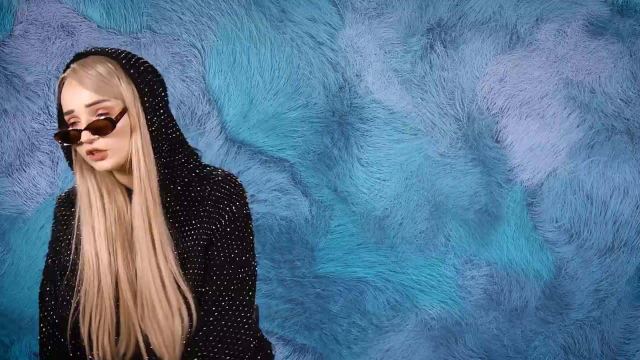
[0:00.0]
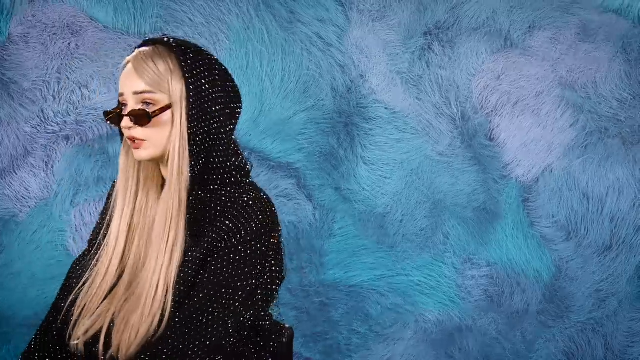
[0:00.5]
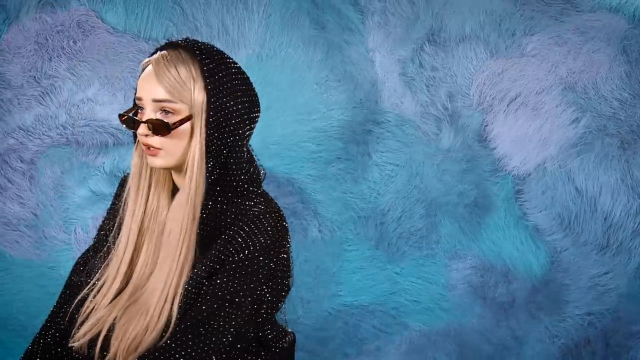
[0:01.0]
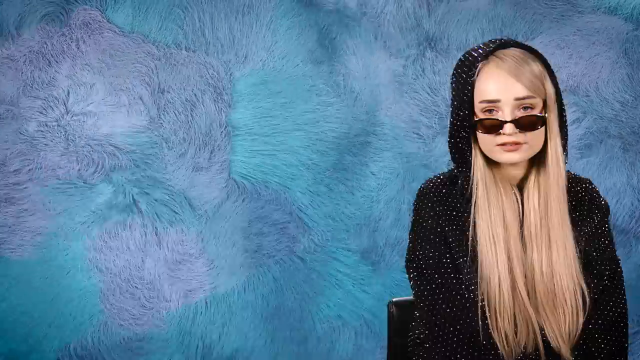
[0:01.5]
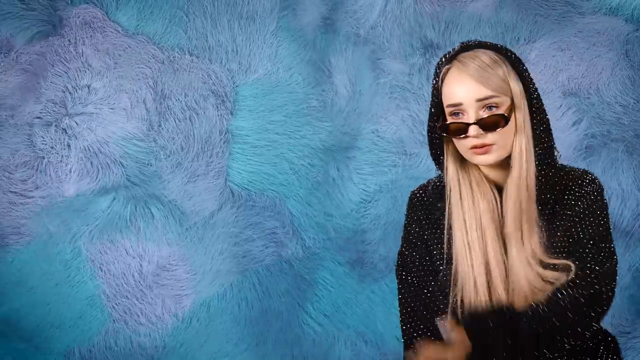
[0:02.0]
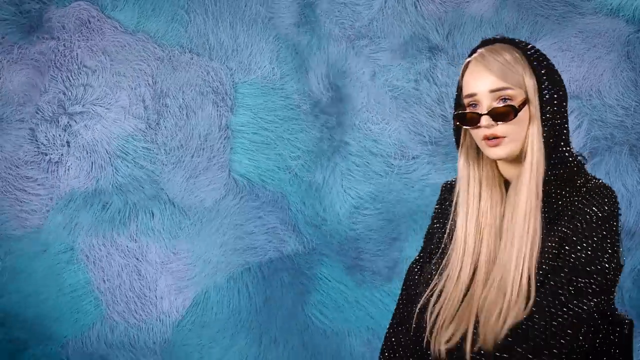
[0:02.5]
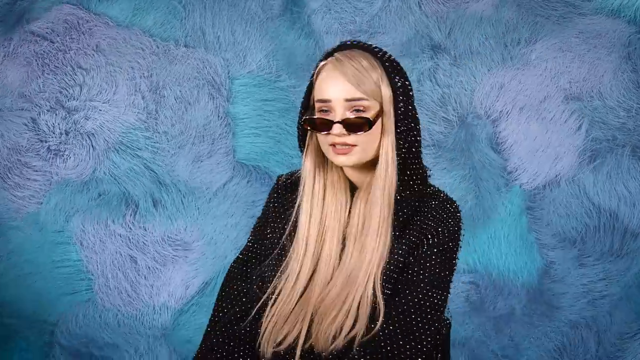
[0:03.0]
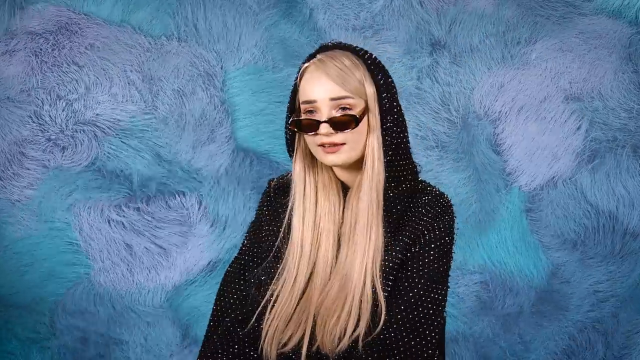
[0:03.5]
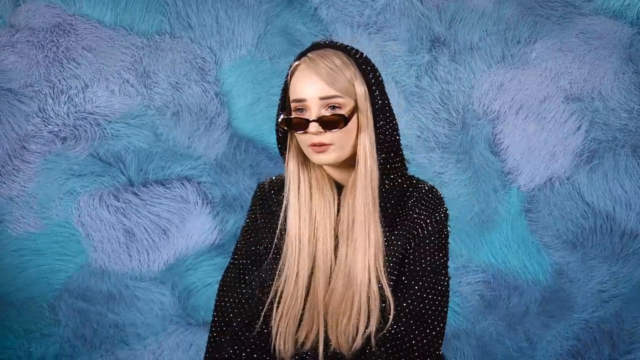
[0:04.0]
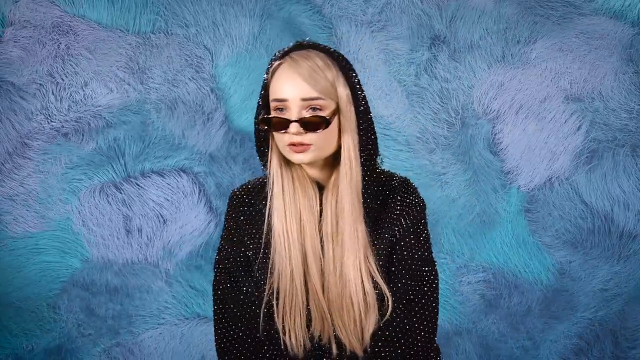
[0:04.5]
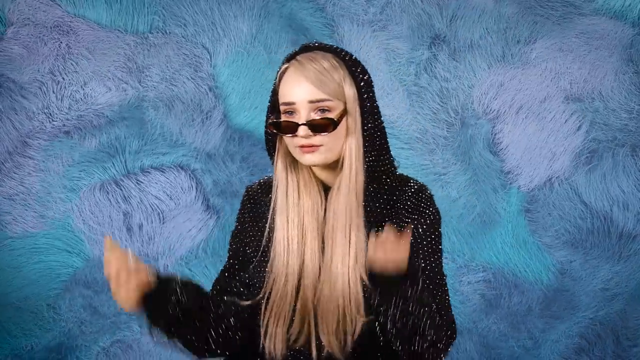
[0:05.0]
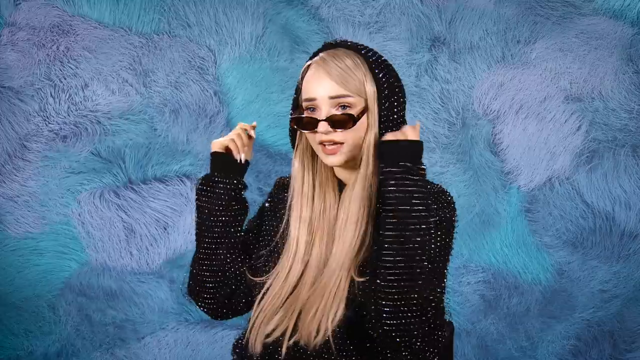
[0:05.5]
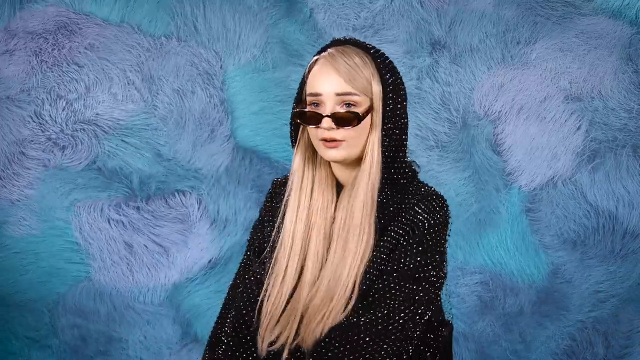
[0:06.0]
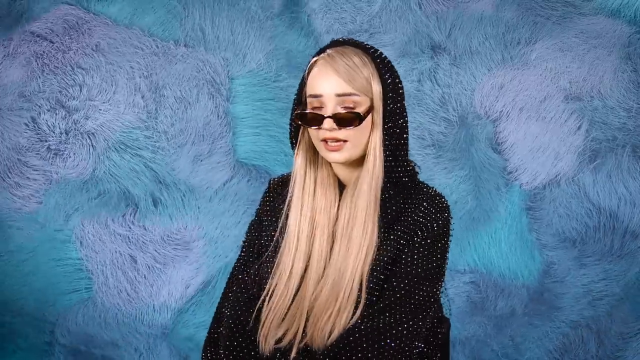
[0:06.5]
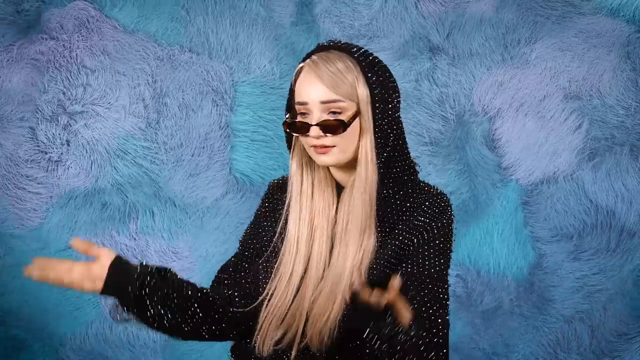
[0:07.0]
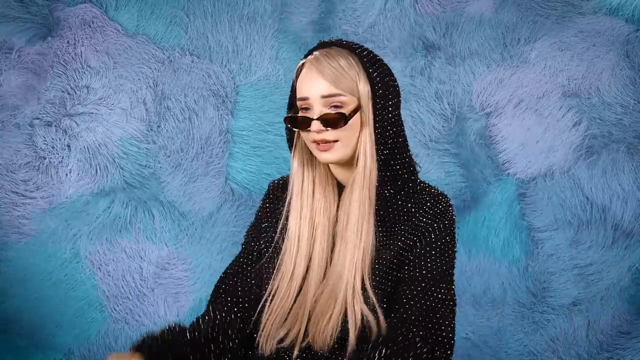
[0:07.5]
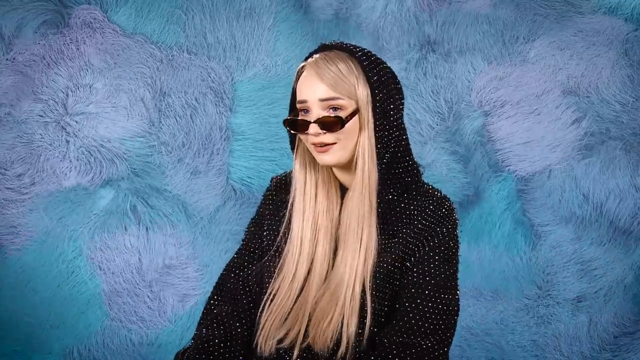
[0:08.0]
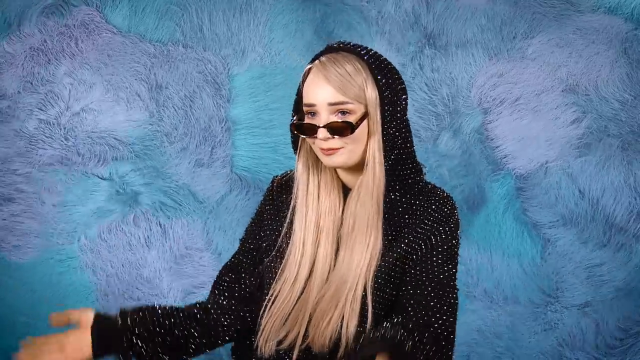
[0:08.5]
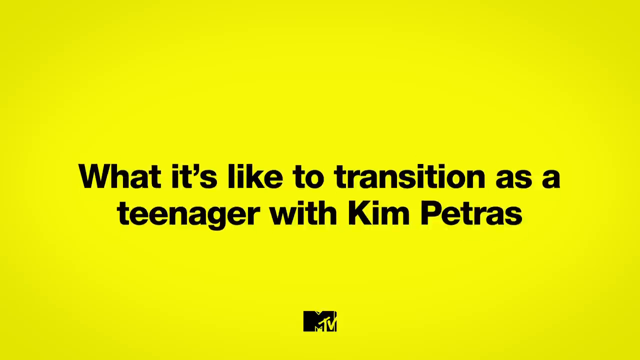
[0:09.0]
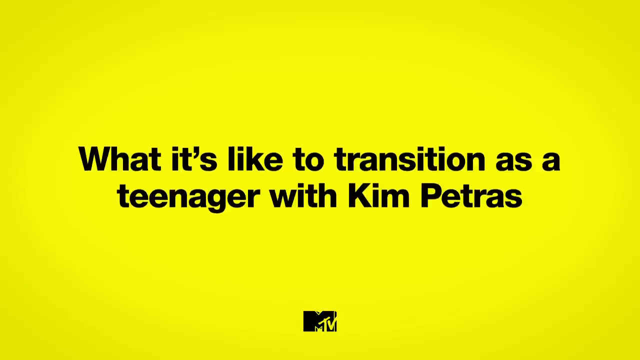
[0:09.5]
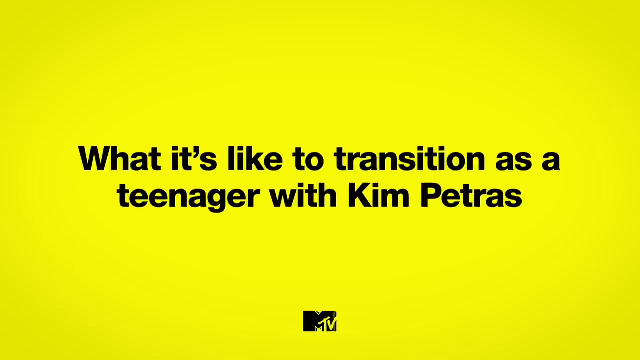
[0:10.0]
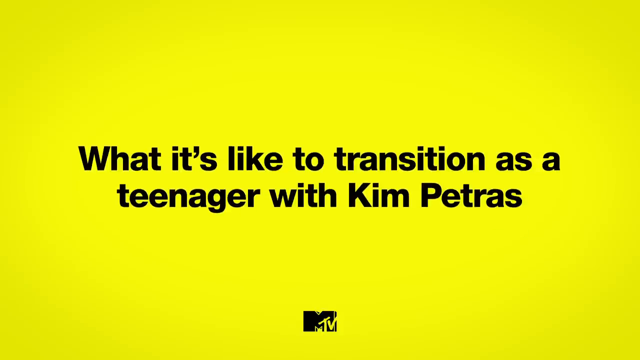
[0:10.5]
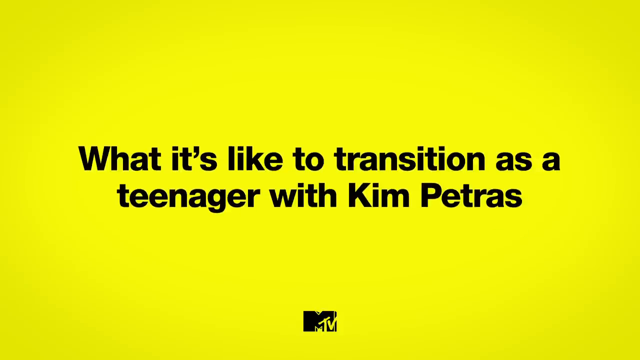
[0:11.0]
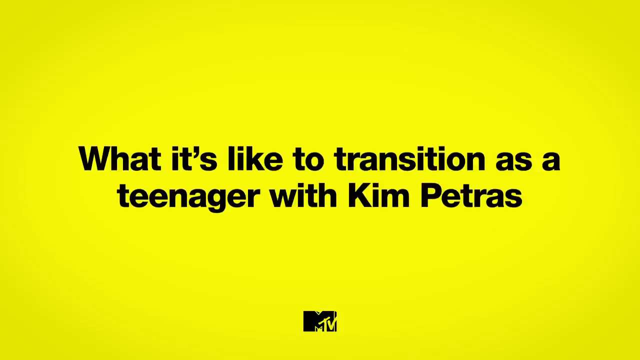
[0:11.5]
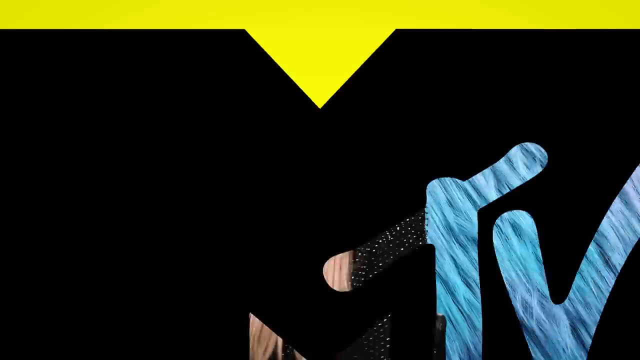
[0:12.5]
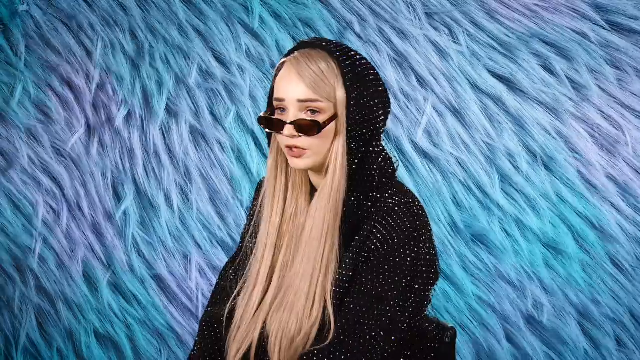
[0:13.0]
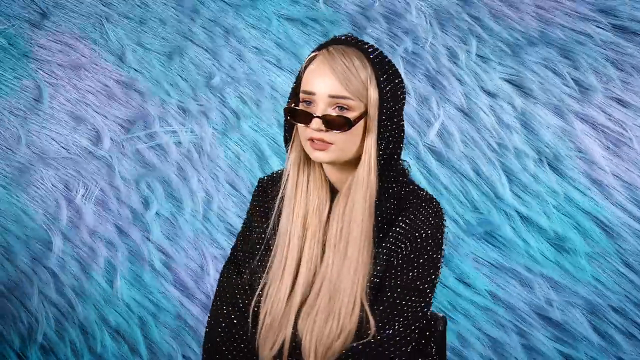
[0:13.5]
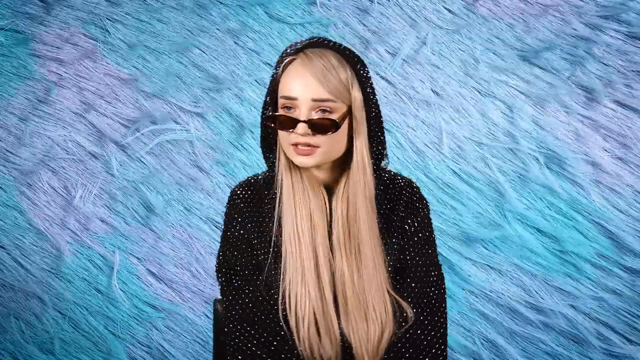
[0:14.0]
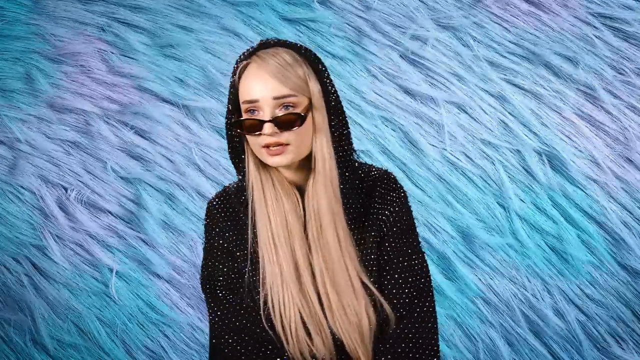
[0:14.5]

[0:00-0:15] The main subject is a white person named Kim Patras, who appears to be in their mid-20s, with blonde hair and glasses, wearing a black sequined jacket. They are being interviewed, talking and answering questions. Only this one person appears. Between the interview shots are clips apparently from this person's music videos, also featuring them singing and dancing. The interview background looks like something fluffy, moving, and blue and purple. At the beginning, one question is displayed on the screen.